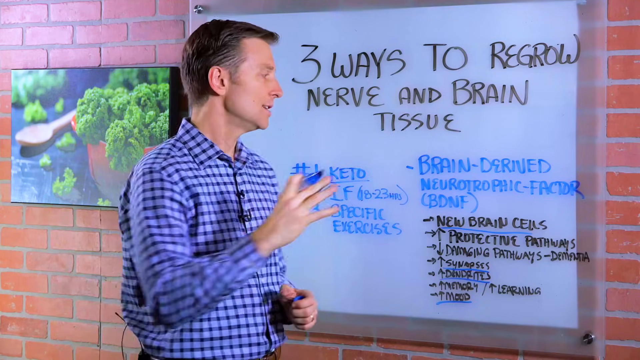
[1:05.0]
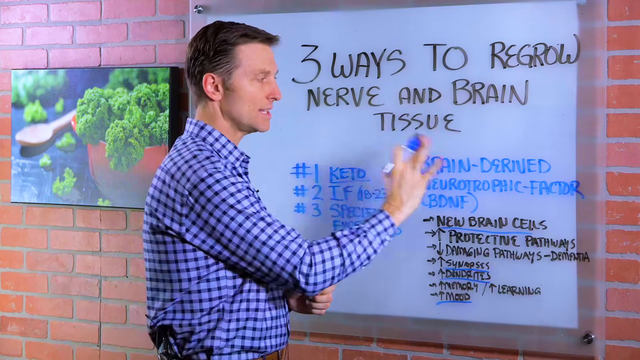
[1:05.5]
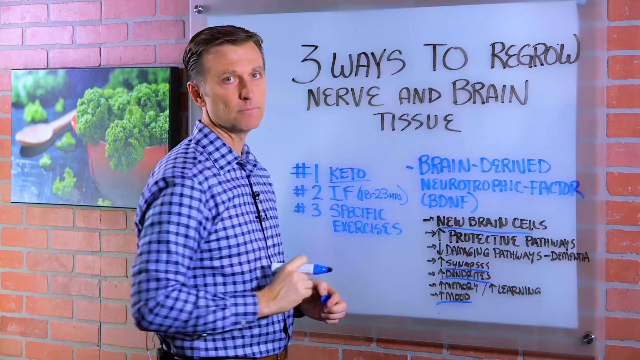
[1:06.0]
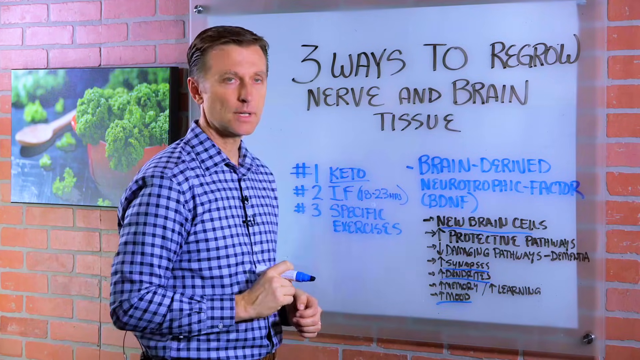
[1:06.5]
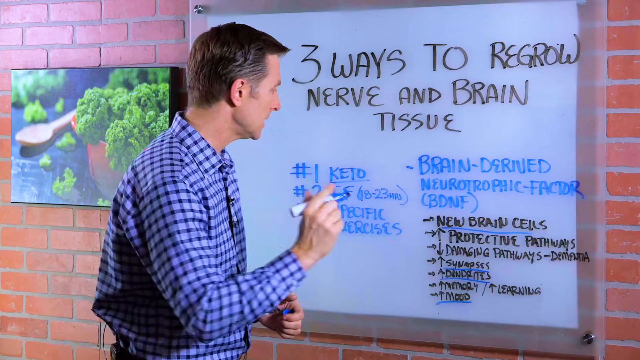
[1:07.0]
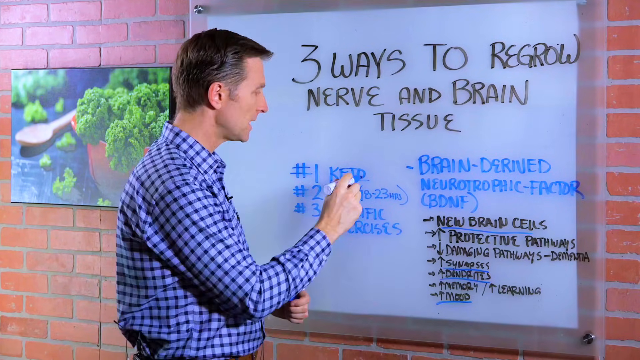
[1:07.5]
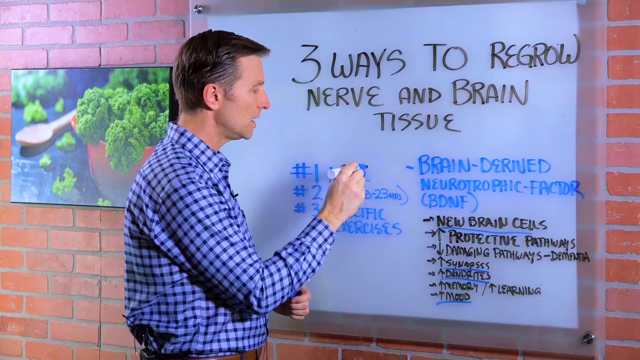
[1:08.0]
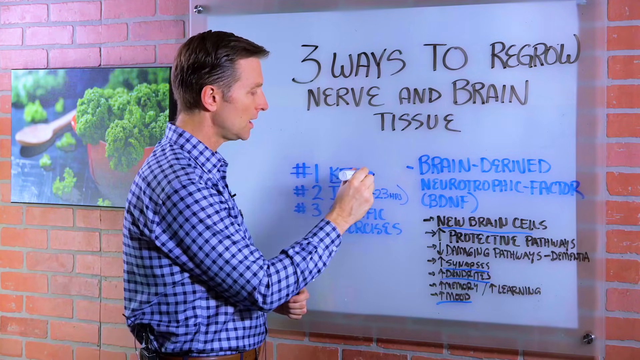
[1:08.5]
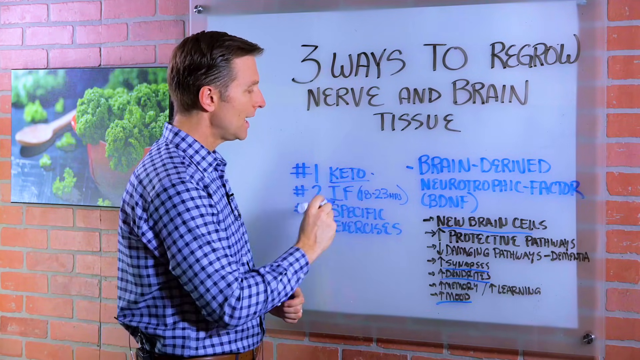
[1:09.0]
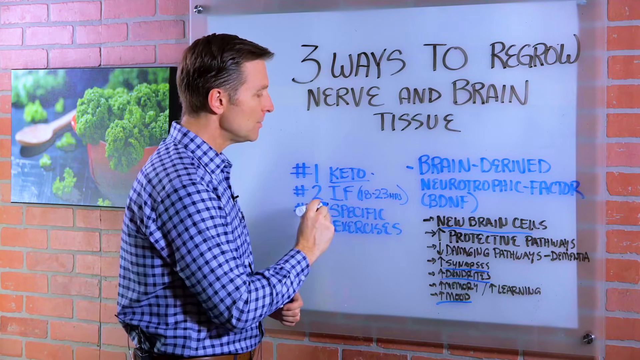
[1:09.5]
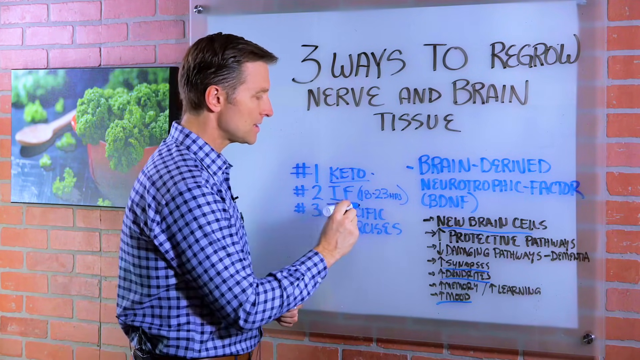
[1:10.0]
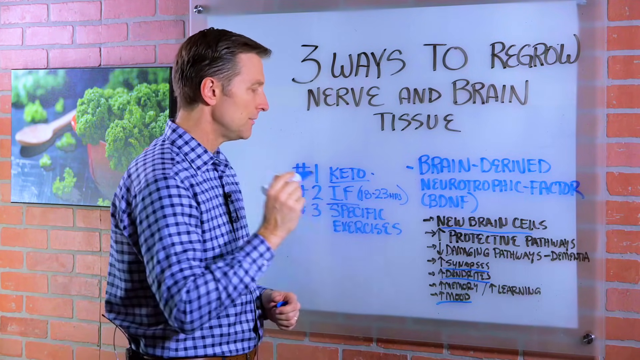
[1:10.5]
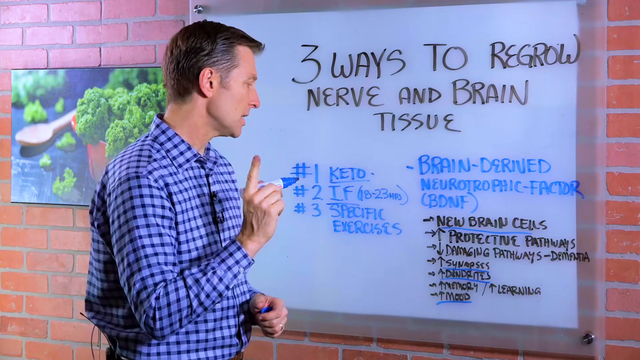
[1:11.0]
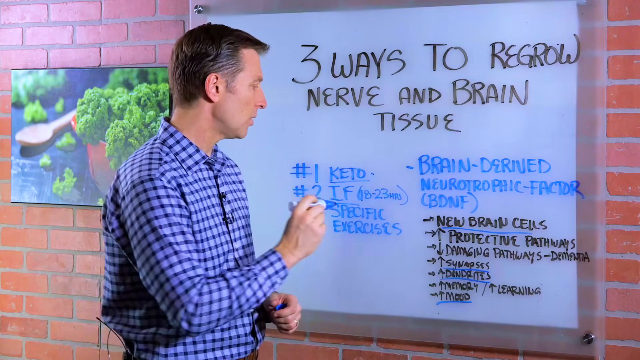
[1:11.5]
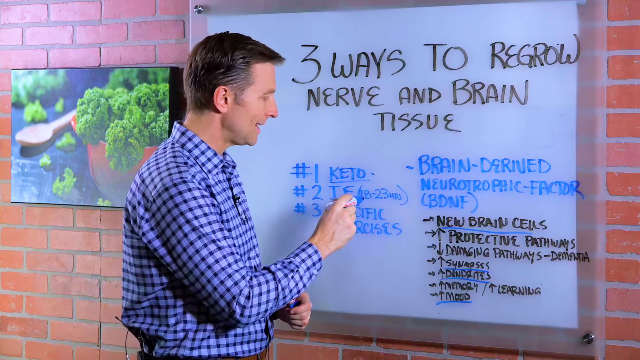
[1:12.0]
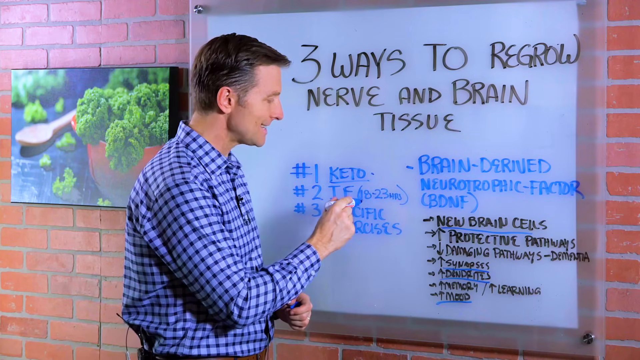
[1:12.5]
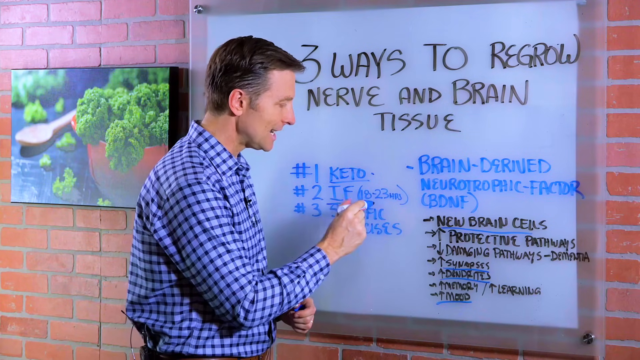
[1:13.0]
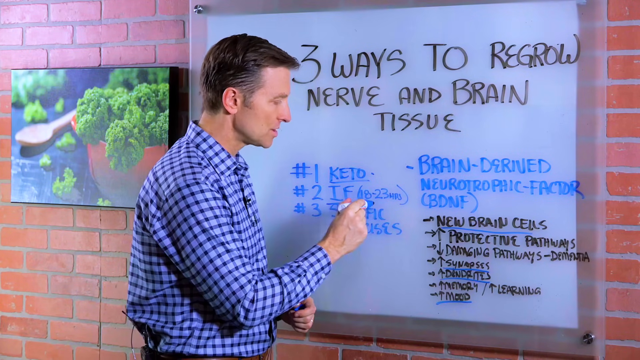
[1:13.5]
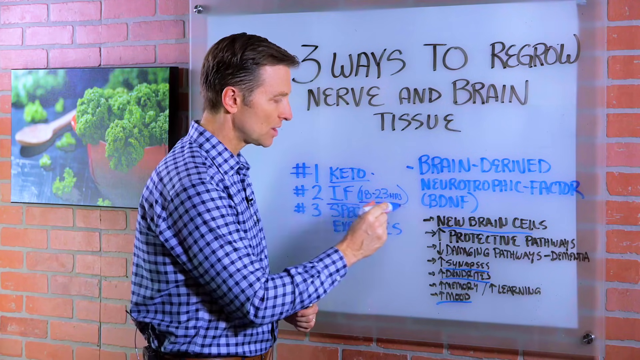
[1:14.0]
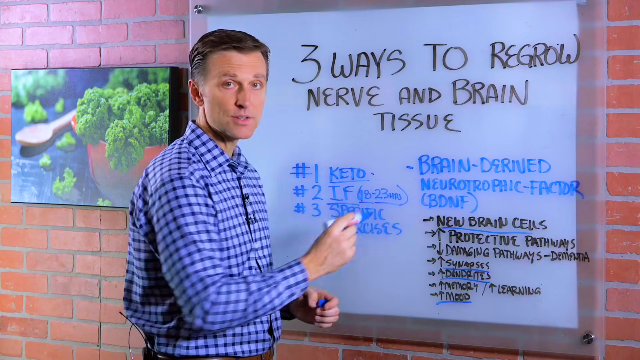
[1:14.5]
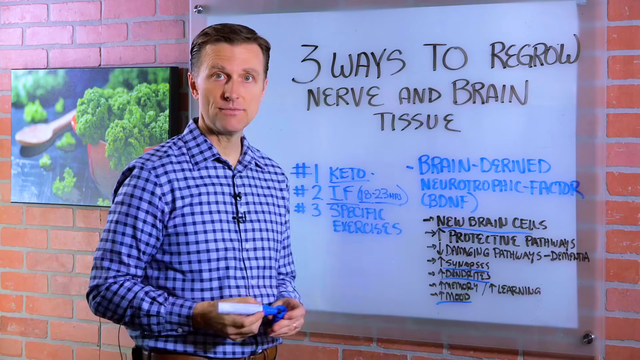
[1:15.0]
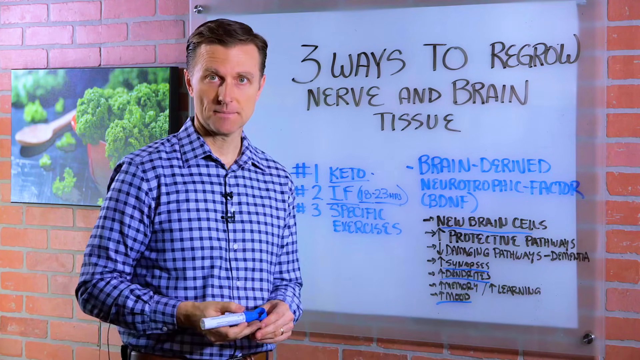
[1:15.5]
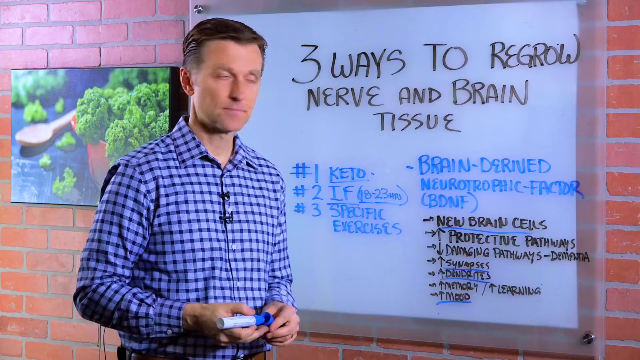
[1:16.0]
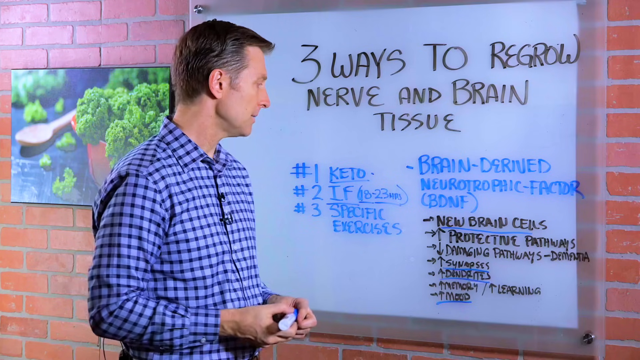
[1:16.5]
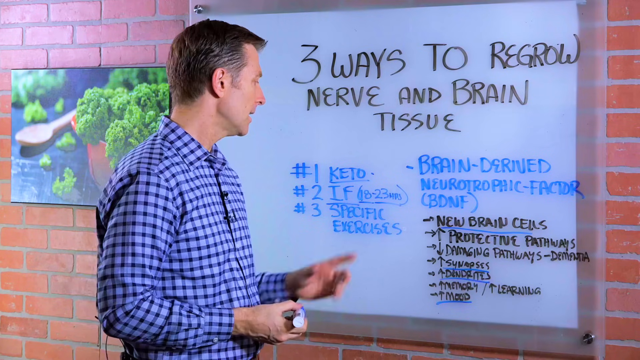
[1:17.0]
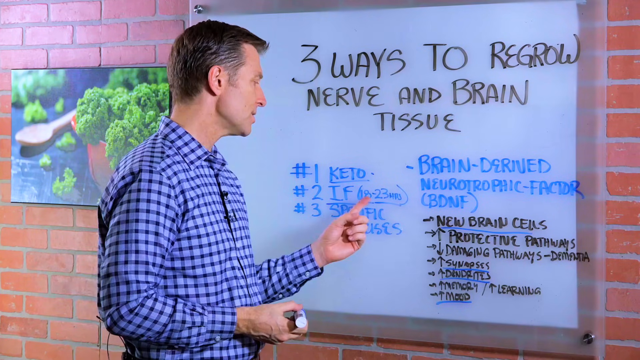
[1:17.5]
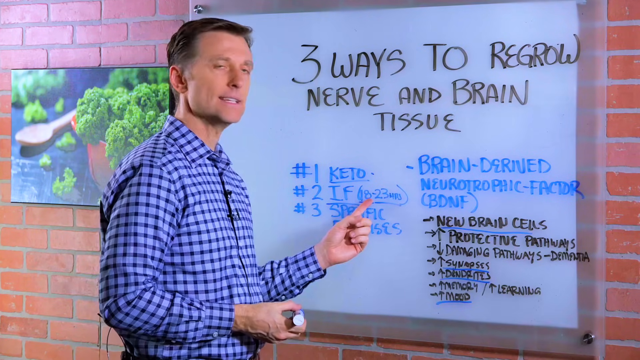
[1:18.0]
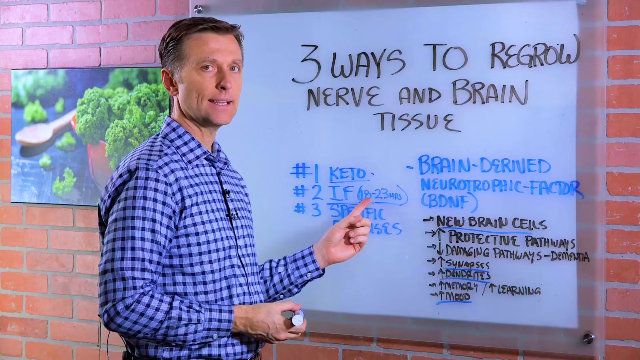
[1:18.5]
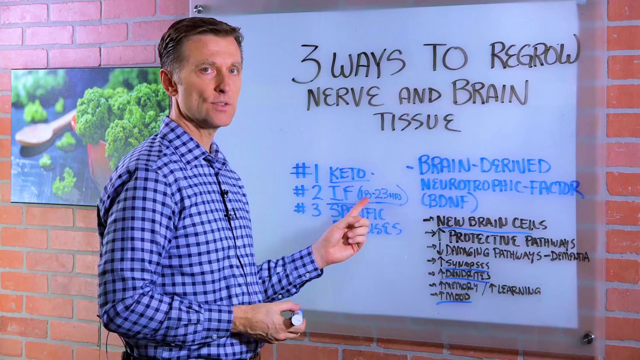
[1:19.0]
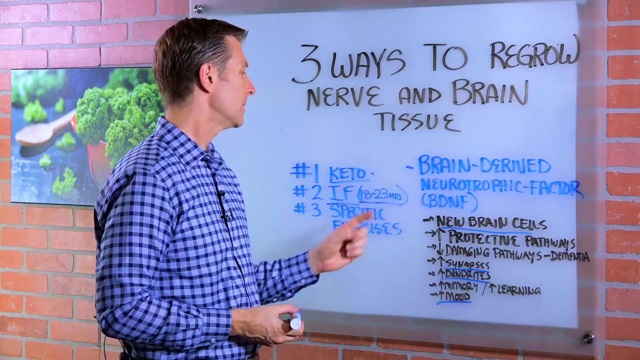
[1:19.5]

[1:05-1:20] A man talks to the camera, then turns to his left and talks while writing or underlining things he had already written on a whiteboard. In black ink the board reads "three ways to regrow nerve and brain tissue," with a numbered list from one to three on the left and other key points on the right. He holds a blue marker and wears a purple plaid button-down shirt; he is clean shaven with his hair combed to the side. The whiteboard is attached to a brick wall, which also has a picture of a bowl of a green vegetable, with a wooden spoon in the portrait. He continues to point at different parts of the whiteboard.